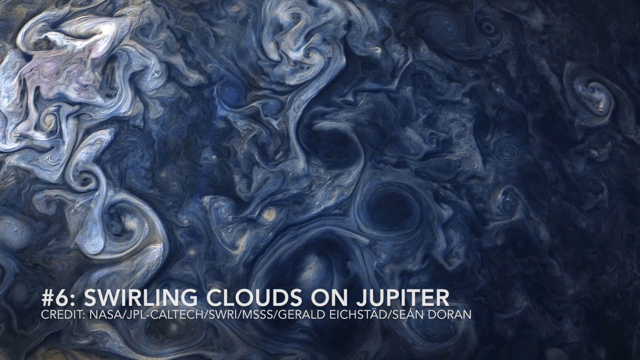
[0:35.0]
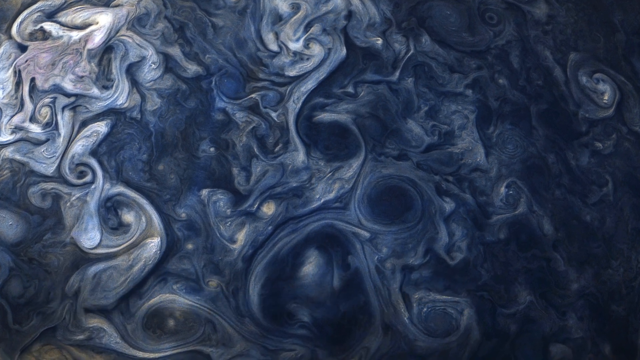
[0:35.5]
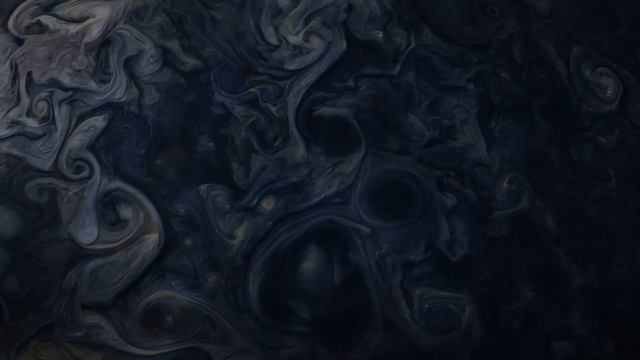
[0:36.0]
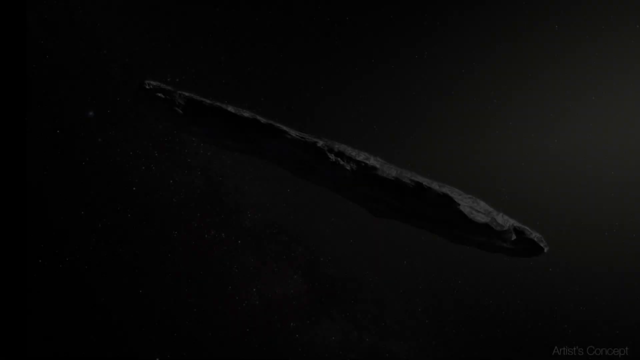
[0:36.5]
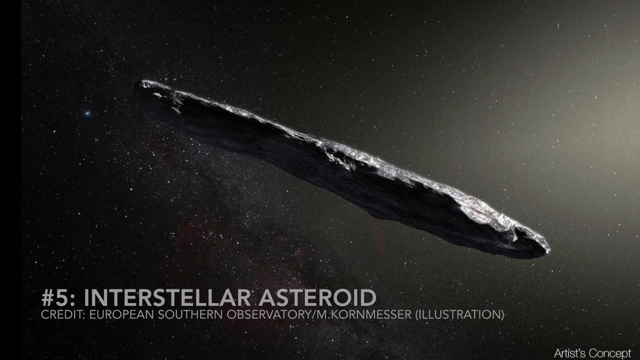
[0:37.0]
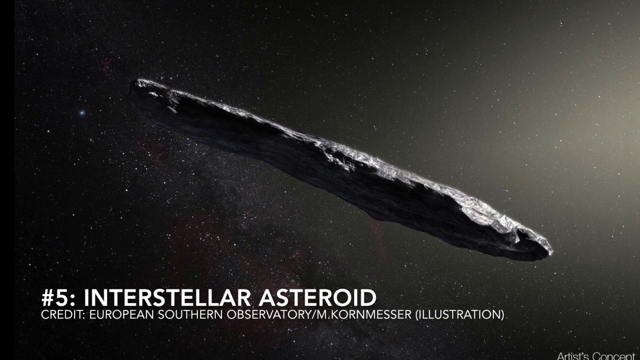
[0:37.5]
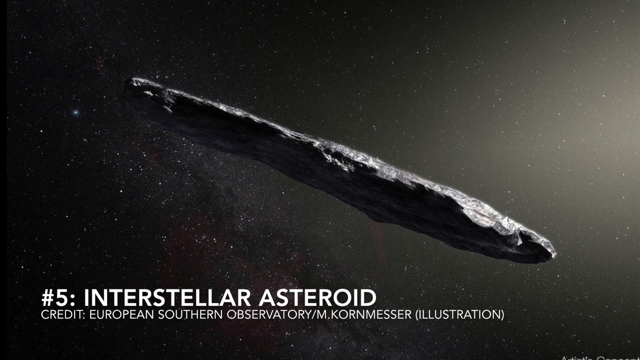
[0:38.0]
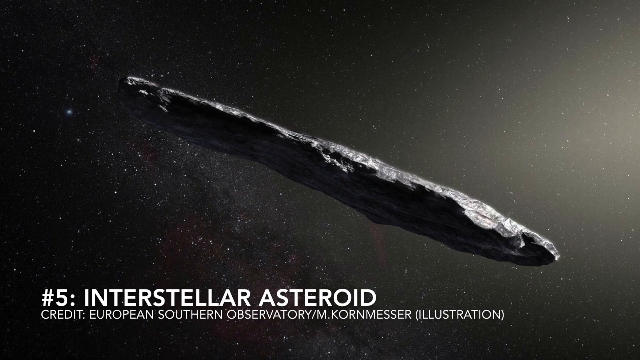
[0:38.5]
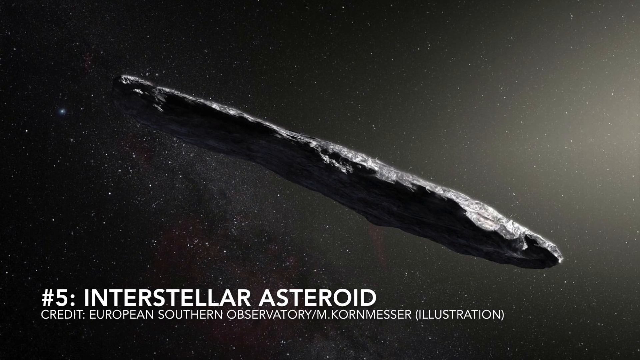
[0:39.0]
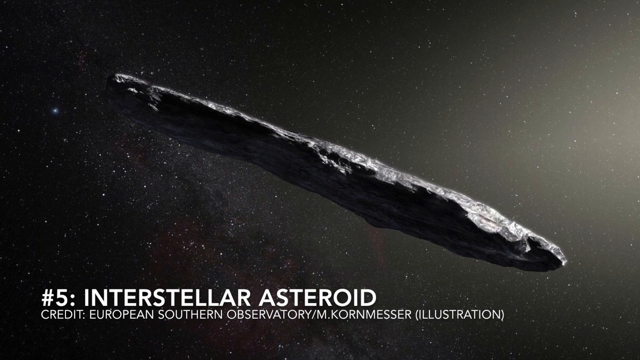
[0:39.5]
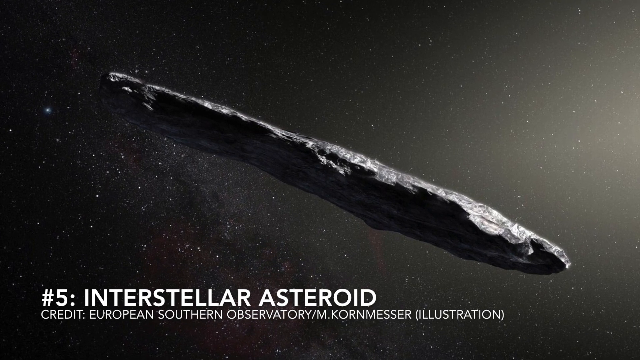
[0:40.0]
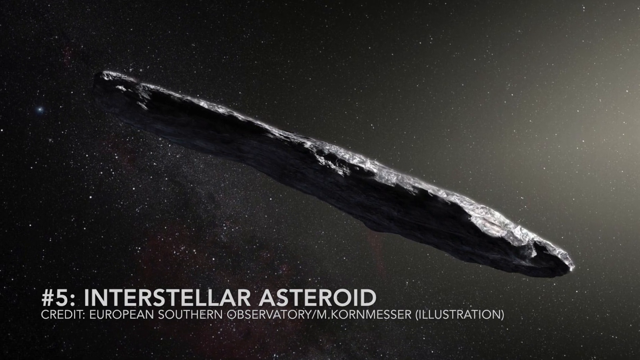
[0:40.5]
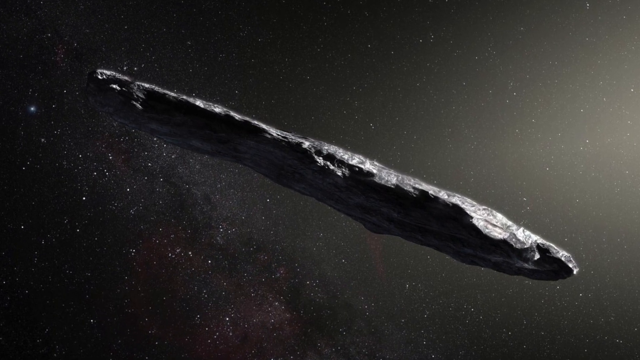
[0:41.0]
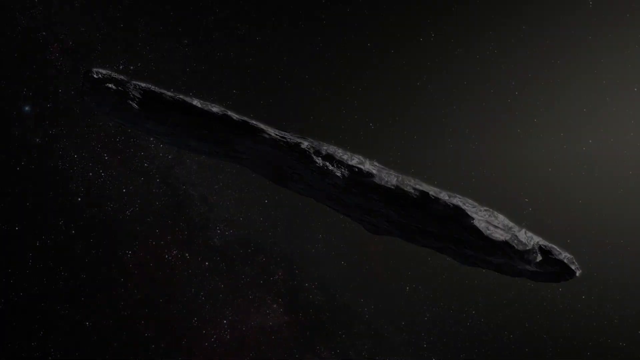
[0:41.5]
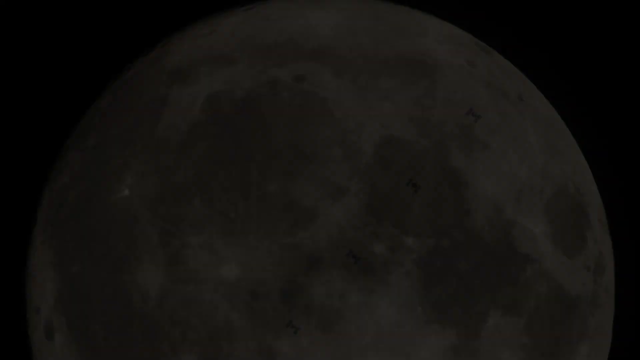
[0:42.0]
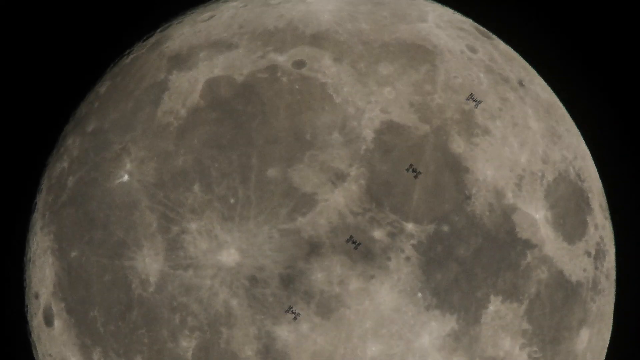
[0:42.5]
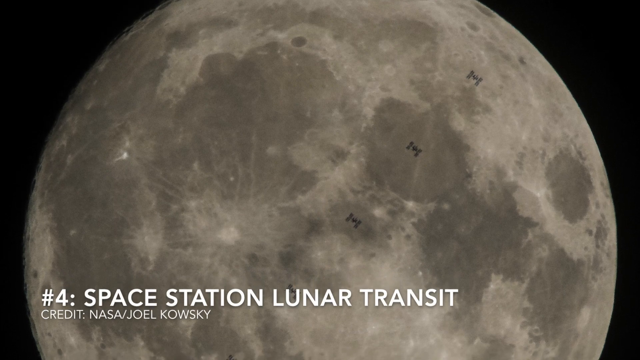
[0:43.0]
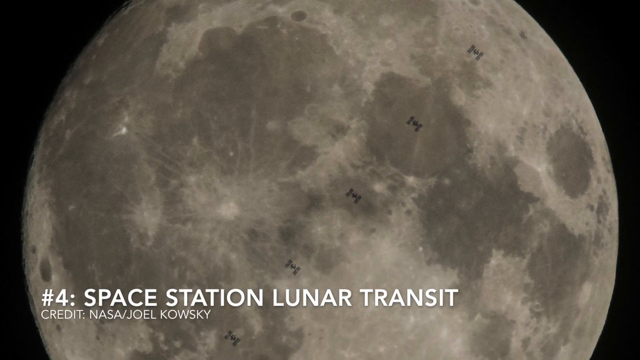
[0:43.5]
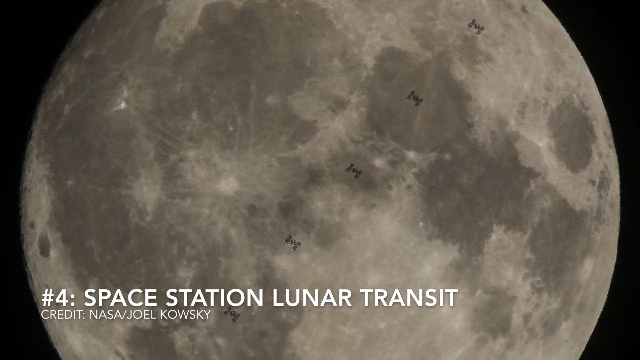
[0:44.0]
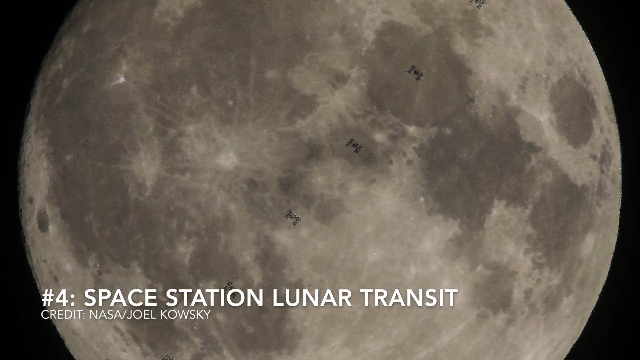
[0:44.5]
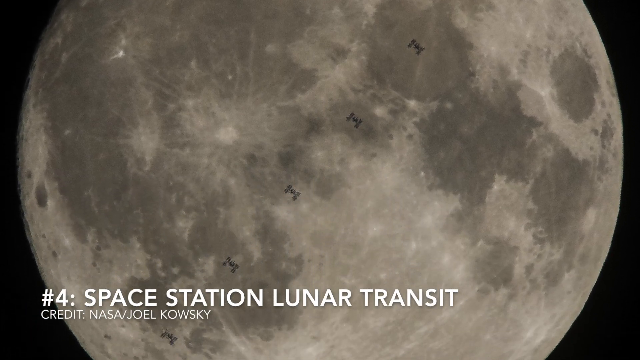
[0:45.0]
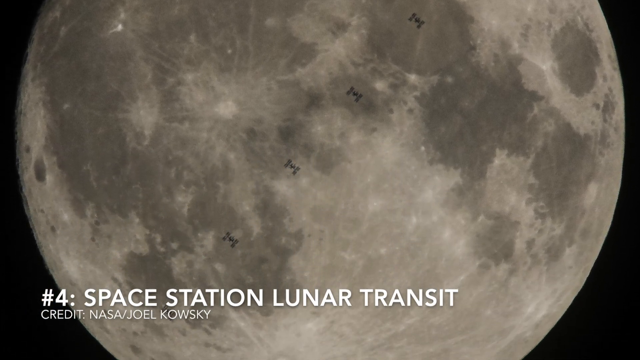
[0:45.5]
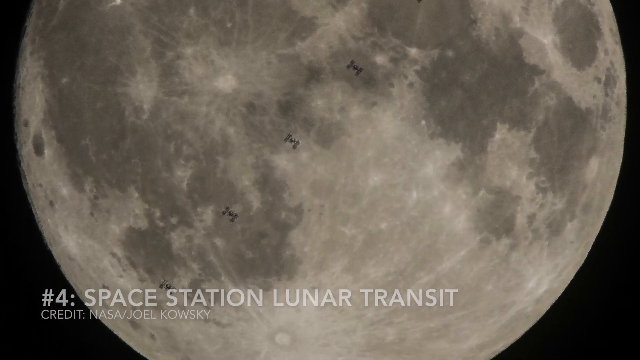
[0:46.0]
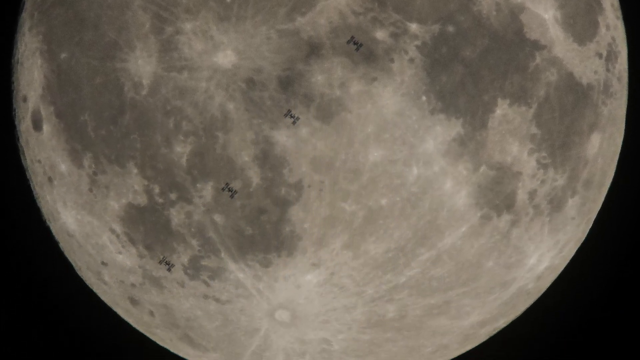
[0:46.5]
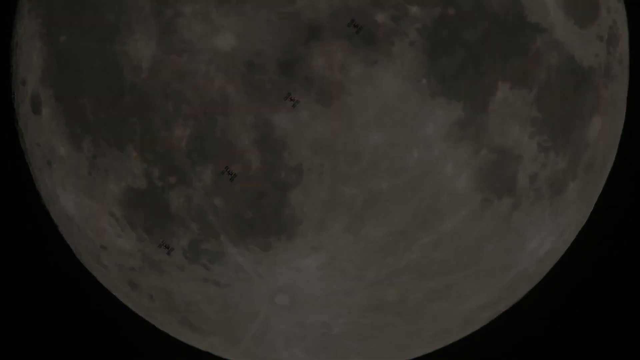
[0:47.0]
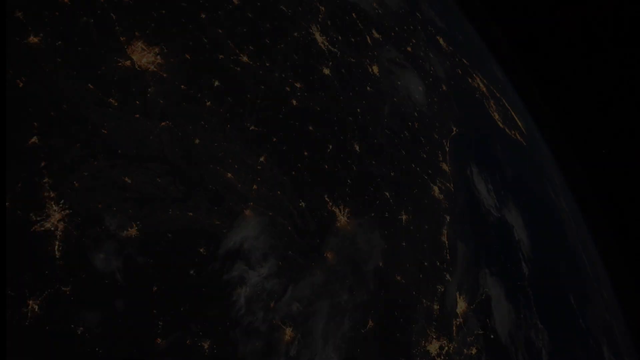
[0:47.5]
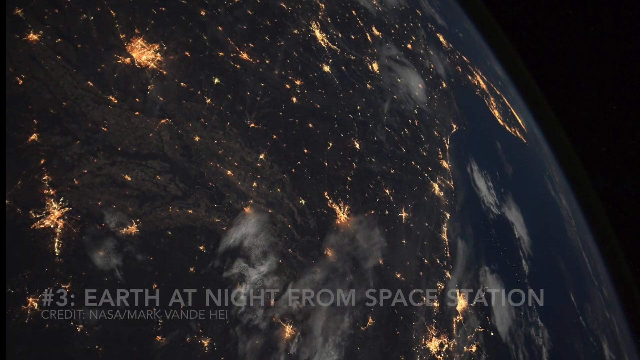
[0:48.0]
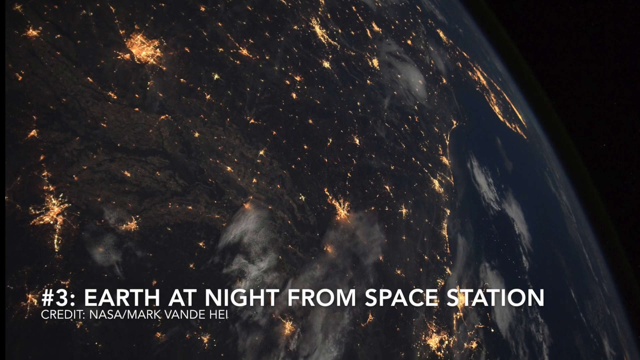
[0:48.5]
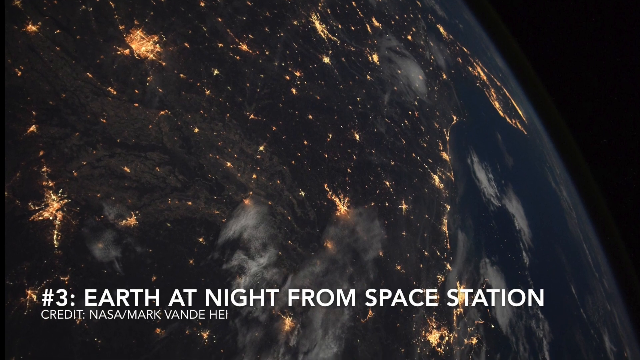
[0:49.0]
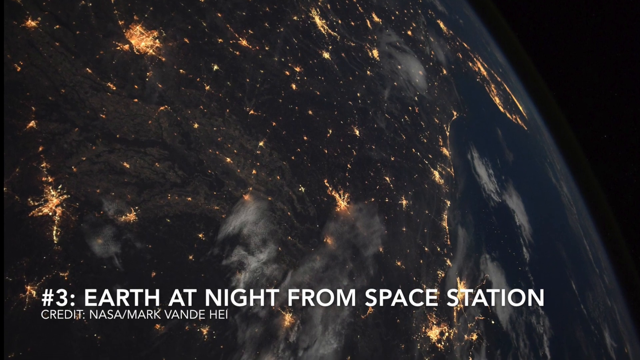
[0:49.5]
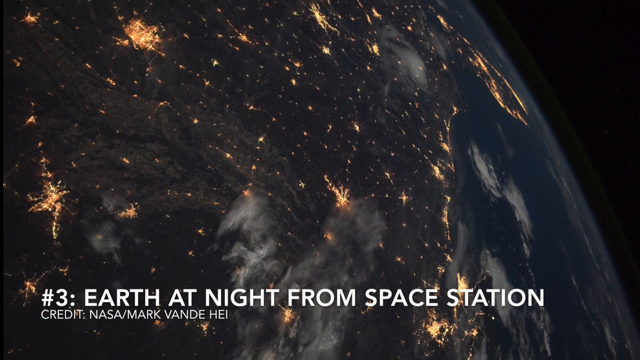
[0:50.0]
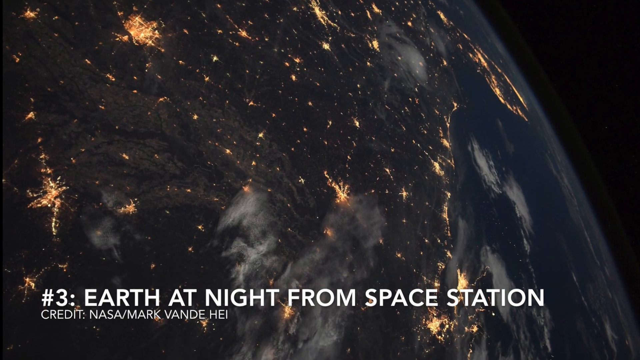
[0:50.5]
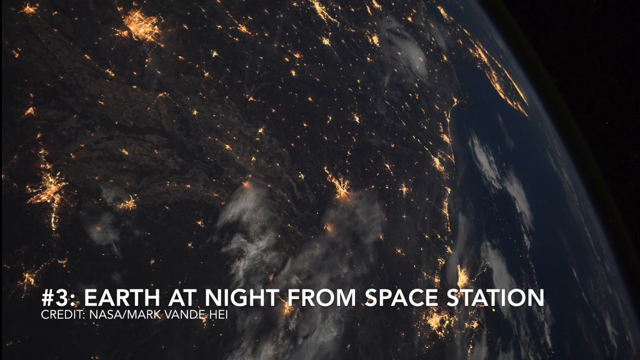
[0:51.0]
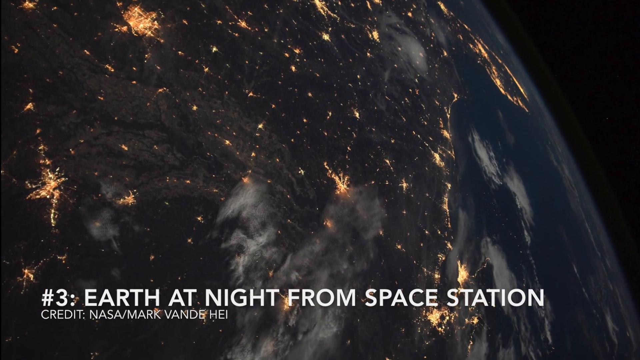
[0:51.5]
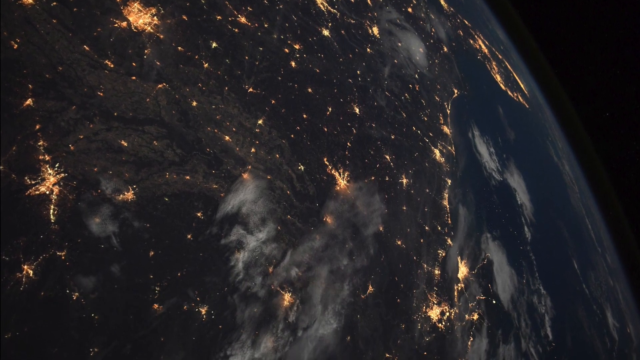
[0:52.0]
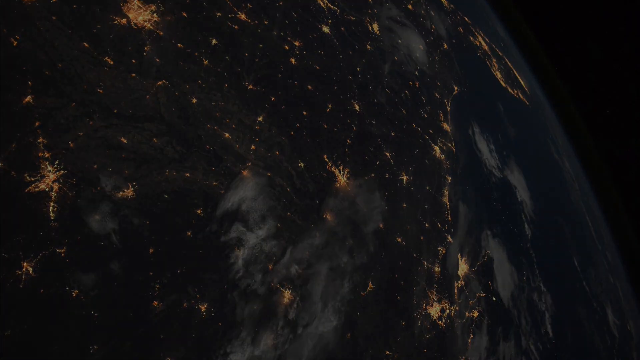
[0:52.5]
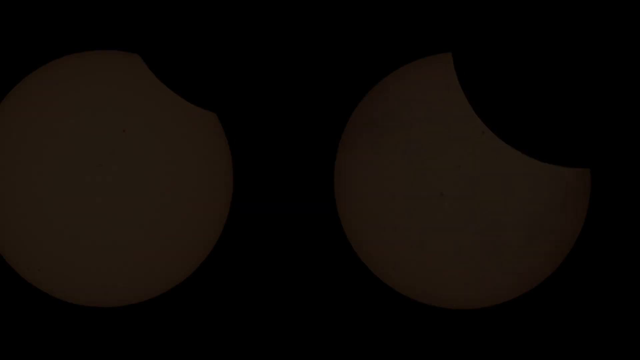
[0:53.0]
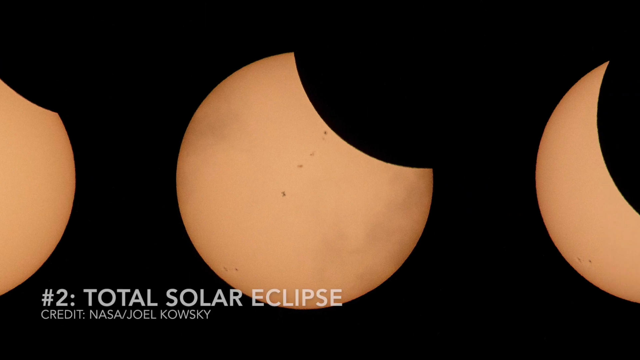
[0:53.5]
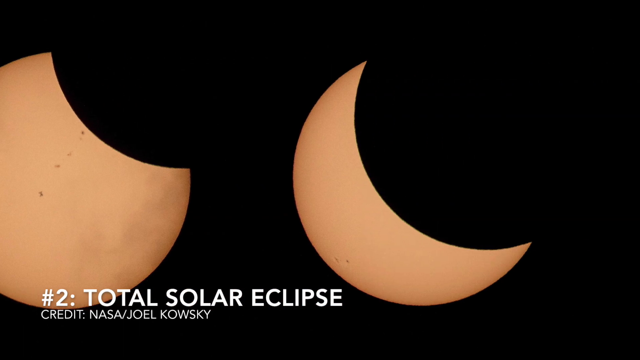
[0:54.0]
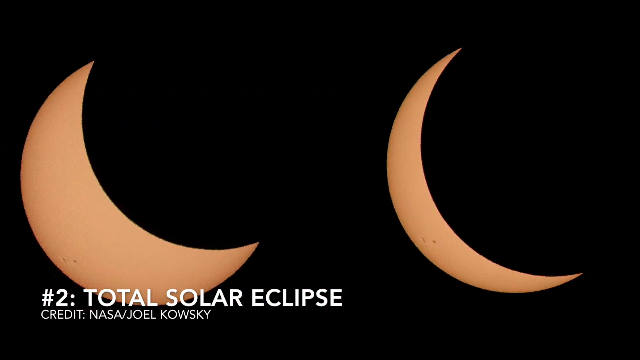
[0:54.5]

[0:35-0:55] The Jupiter clouds image is briefly visible before number five, "interstellar asteroid". It has a black background, with what looks like a source of light coming from the right-hand side. All the way to the left, white speckles of stars cover the background. The light shines on a somewhat jagged, cylinder-shaped stone with a point at the front, angled from the upper left corner to the bottom right corner and taking up the center of the picture. It looks like obsidian, a black, glossy stone floating in vacant space. Number four reads "space station lunar transit": a vivid image of what appears to be the moon, an orb- or globe-shaped image on a black background, with shades of white and gray all through the moon. The view pans from the top of the image to the bottom. Number three is labeled "Earth at night from space station" and shows one part of the Earth against black, the Earth a deep navy blue with bright speckles all over it and some white clouds. The view pans from the top down a little. Number two then appears.